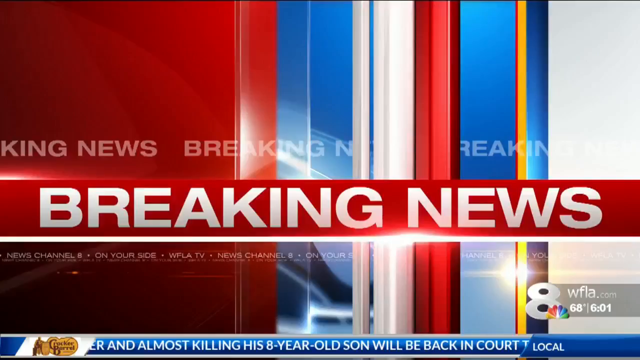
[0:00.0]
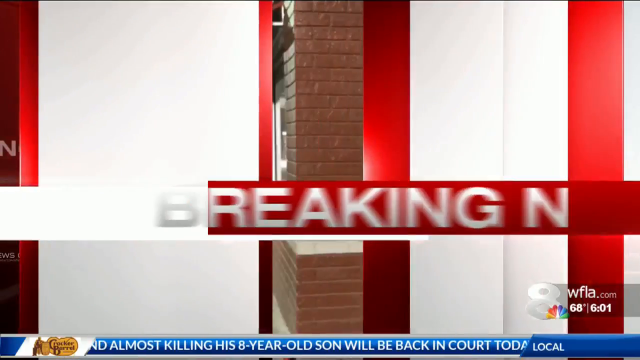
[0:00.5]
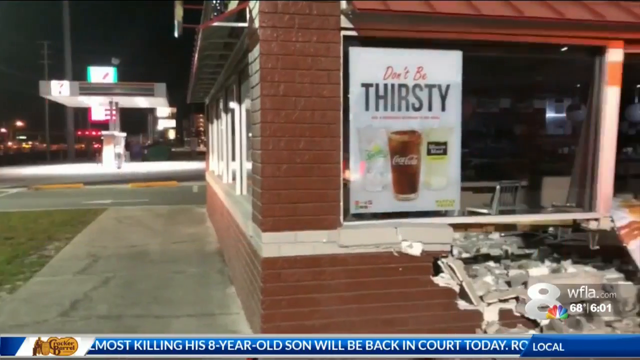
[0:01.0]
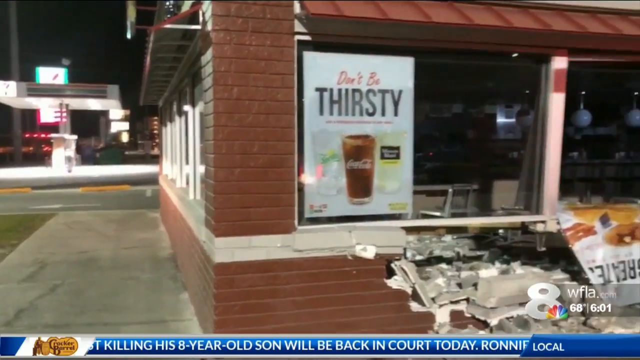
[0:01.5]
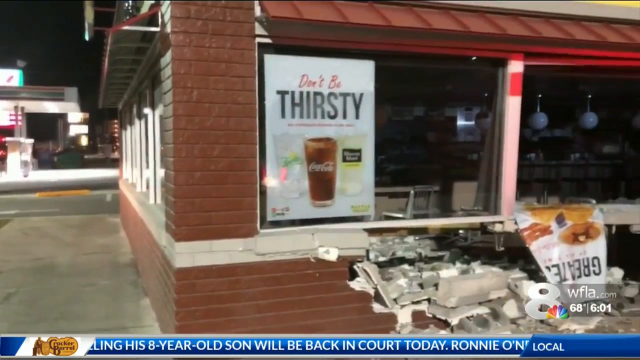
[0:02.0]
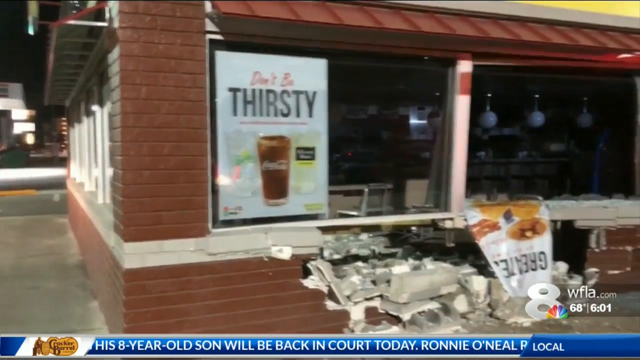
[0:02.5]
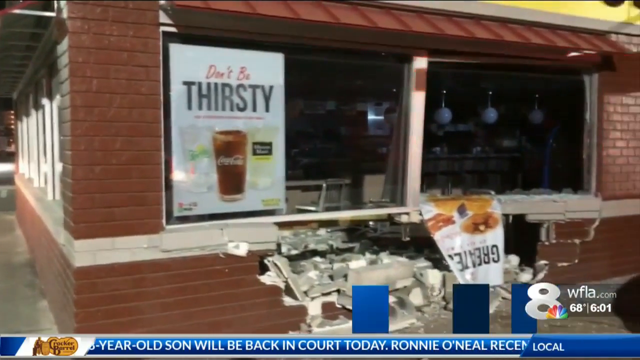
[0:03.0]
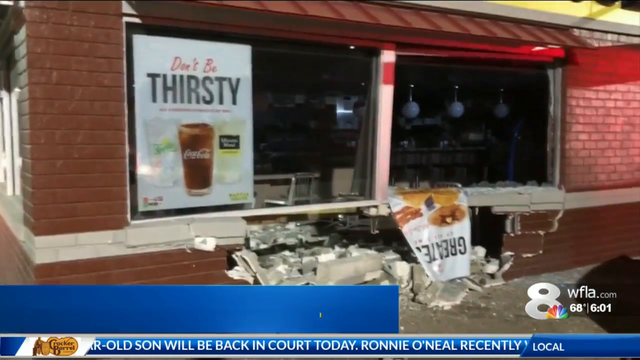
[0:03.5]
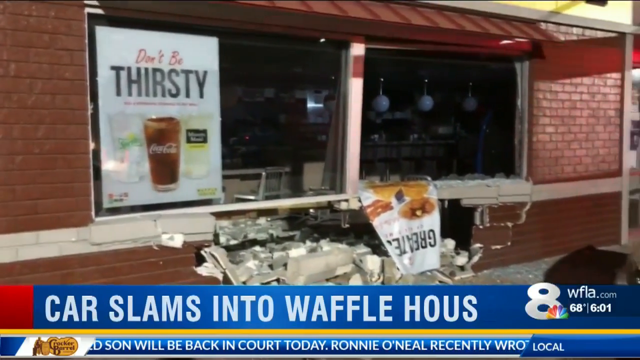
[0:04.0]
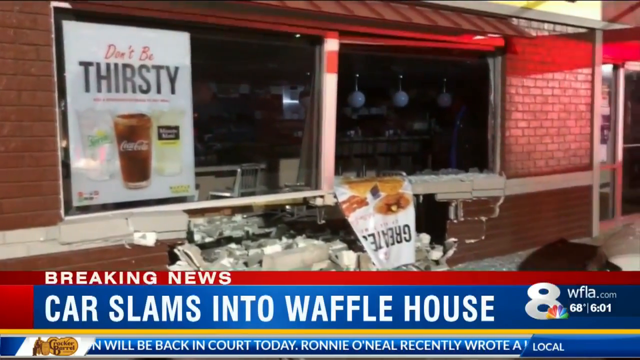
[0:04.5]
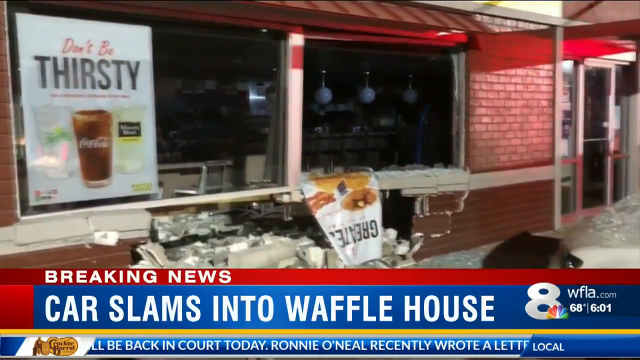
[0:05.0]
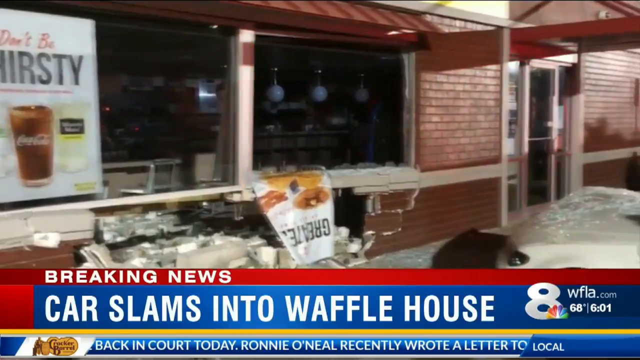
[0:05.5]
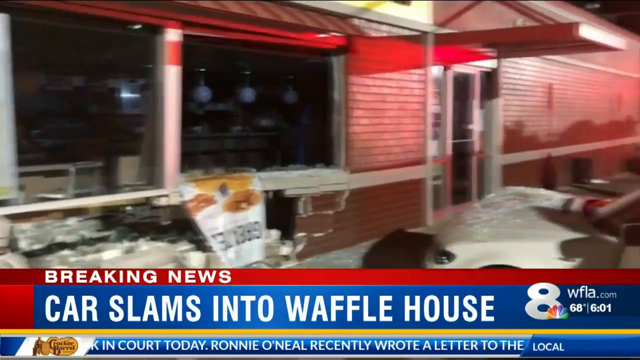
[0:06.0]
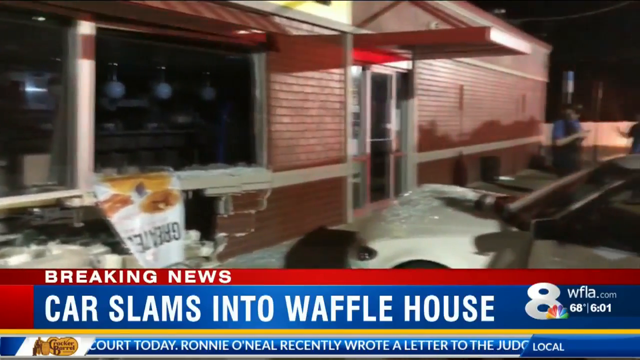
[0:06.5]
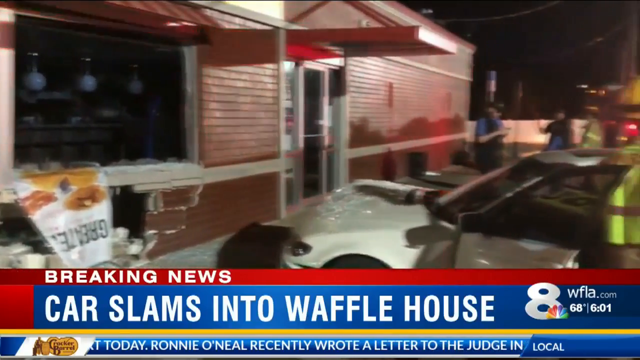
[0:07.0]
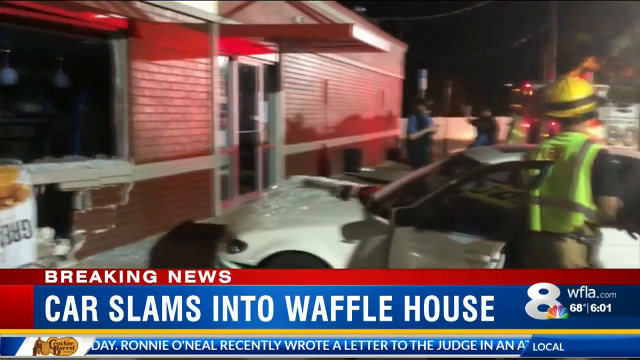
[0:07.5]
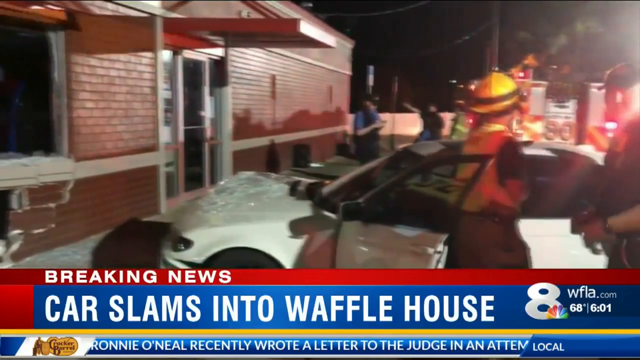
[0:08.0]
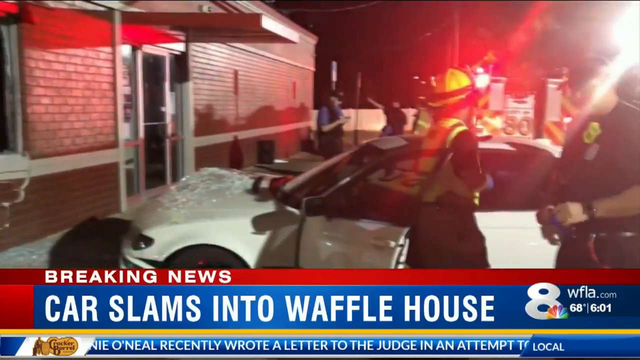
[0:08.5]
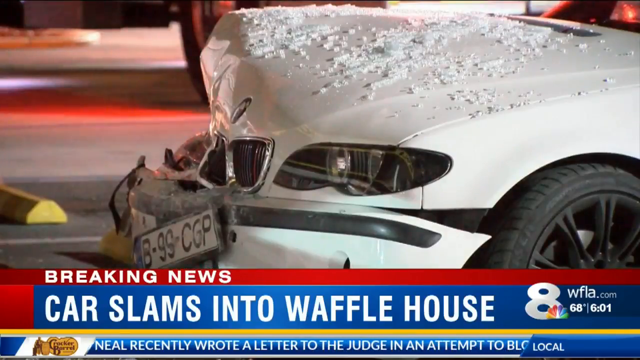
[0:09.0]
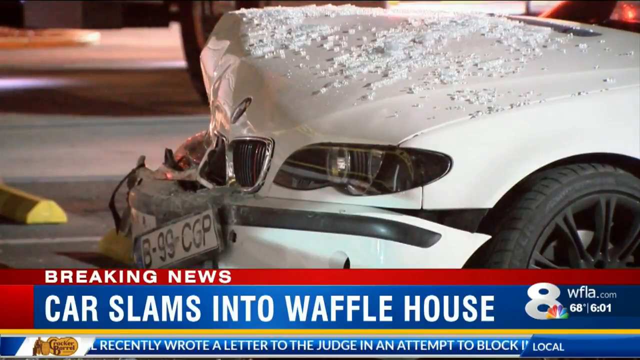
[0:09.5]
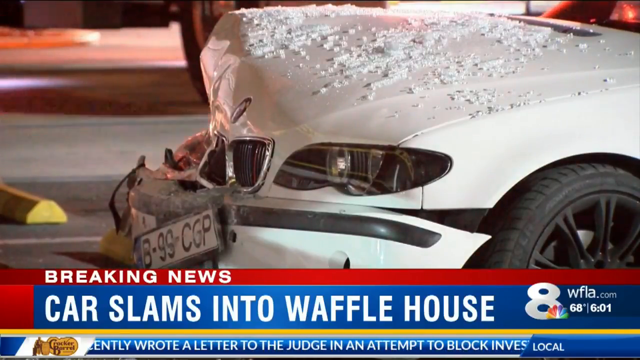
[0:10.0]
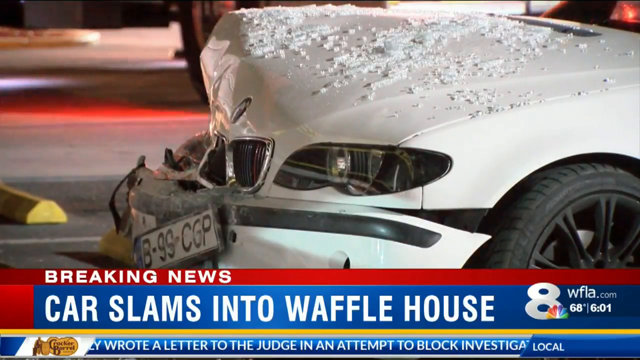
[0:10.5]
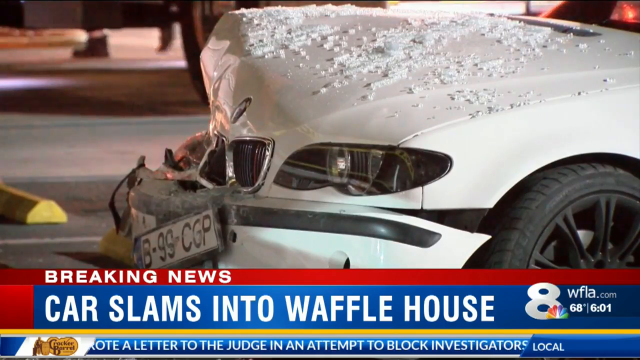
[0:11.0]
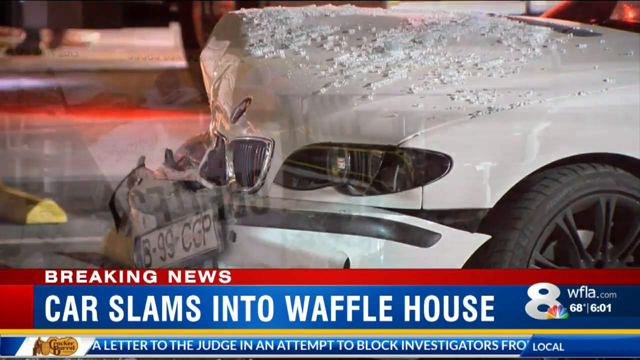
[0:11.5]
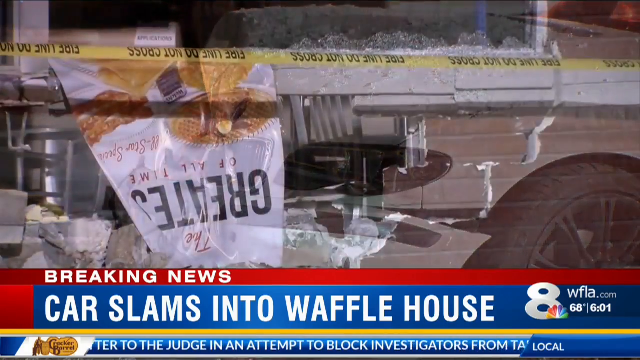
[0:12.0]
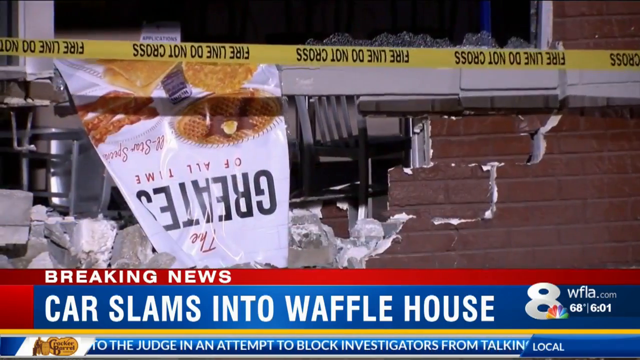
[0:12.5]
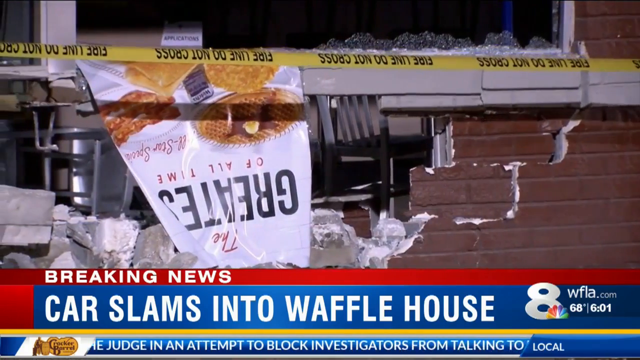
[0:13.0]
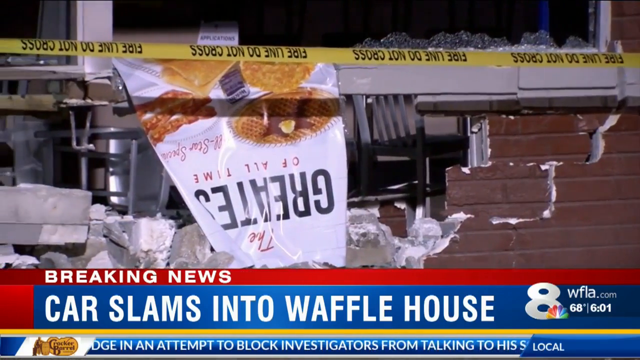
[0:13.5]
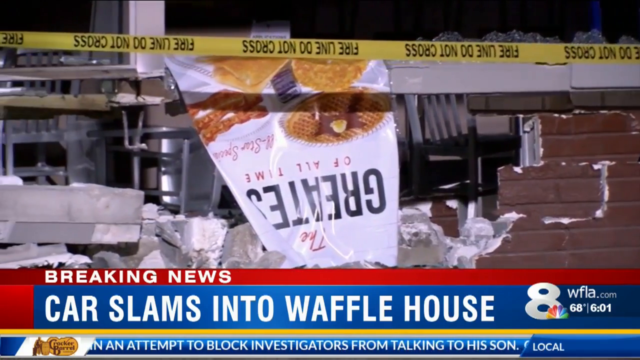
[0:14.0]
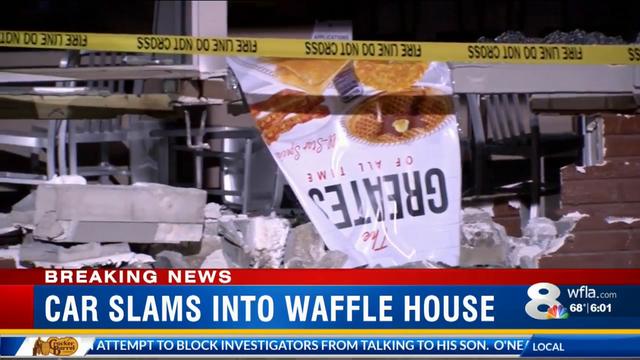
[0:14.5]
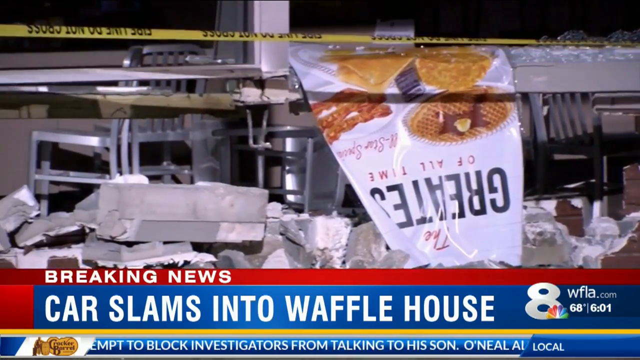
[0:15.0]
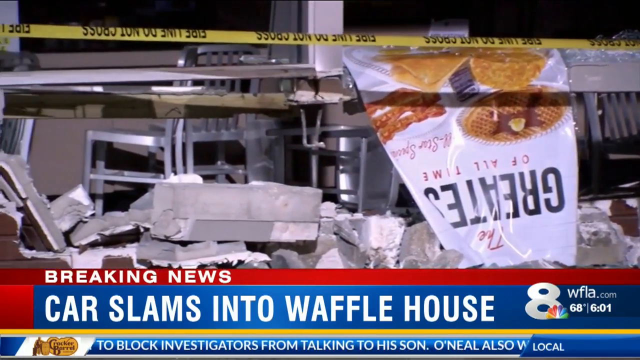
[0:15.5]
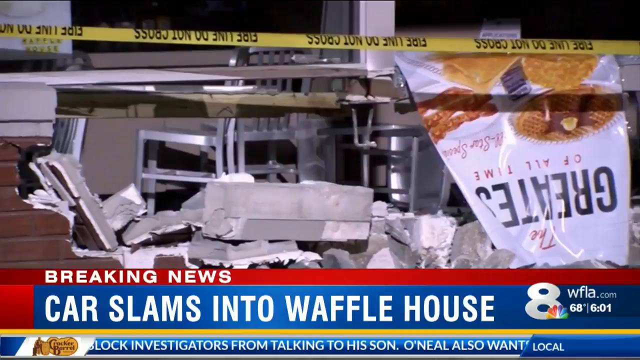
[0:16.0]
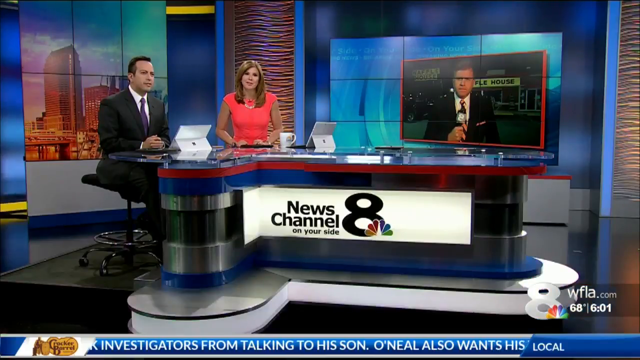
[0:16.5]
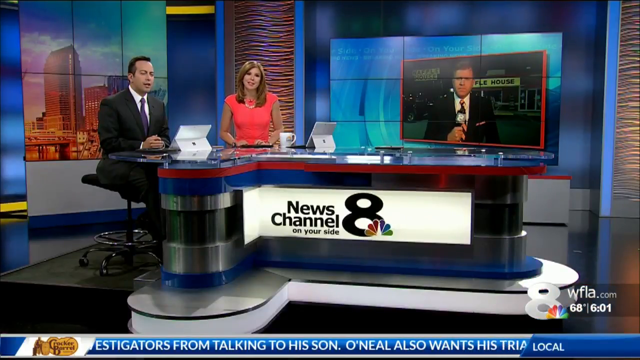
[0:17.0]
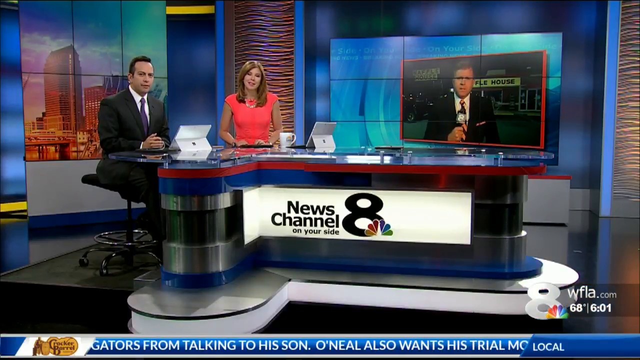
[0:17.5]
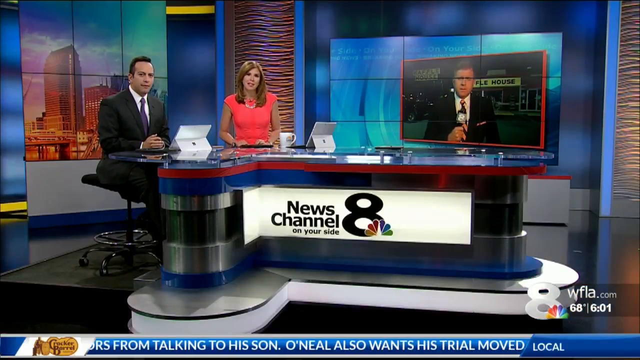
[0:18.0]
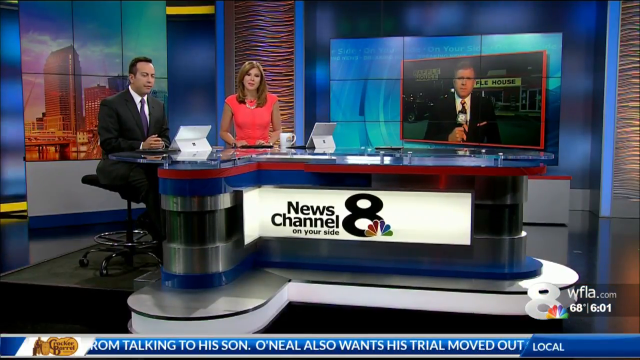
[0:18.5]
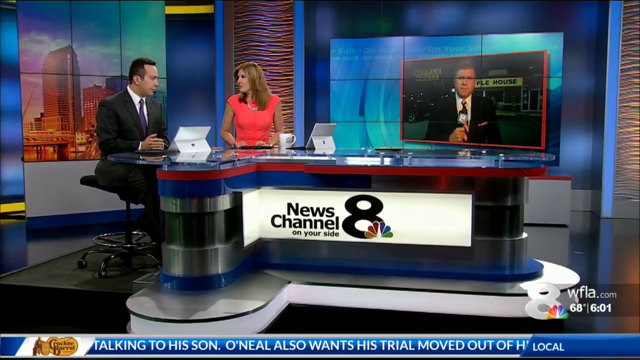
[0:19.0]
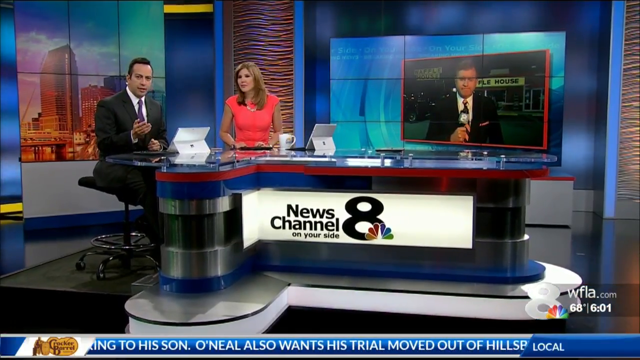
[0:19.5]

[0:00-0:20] The video opens with "breaking news" in very big, bold white letters on a red background. The story concerns a car that crashed into a Waffle House, destroying the building. Two news reporters are in the newsroom, with a TV beside them, and they look like they are about to discuss what happened. At the scene there are police officers and yellow tape. A Coca-Cola glass on the wall appears to have been destroyed in the accident.